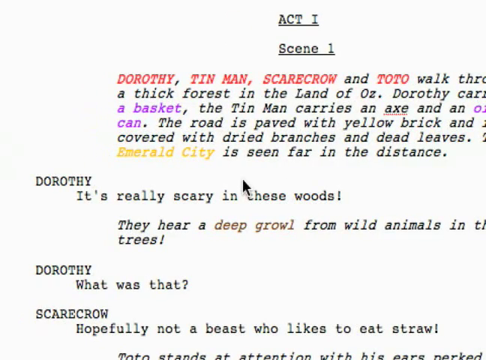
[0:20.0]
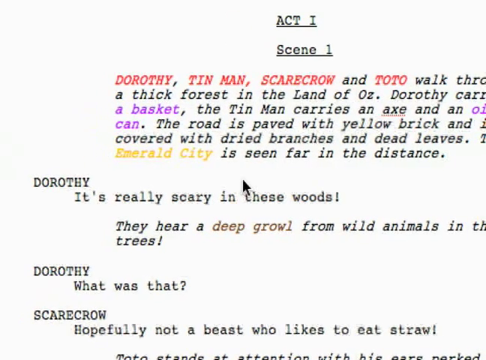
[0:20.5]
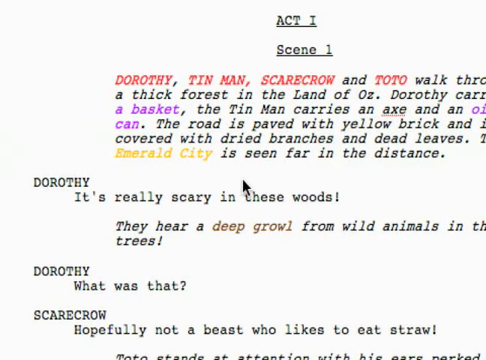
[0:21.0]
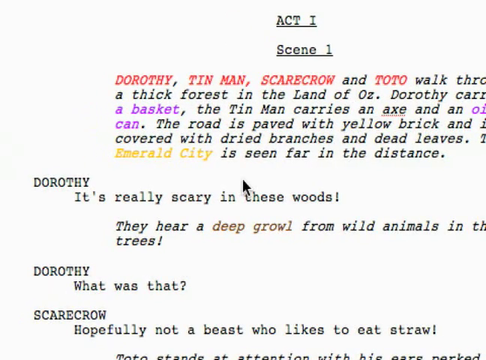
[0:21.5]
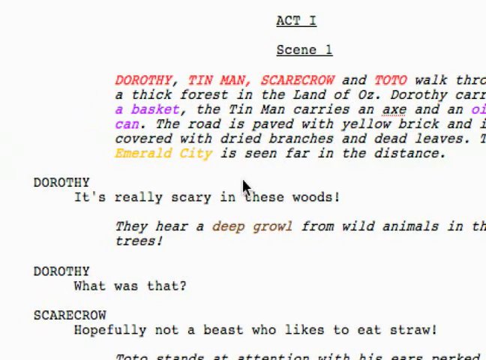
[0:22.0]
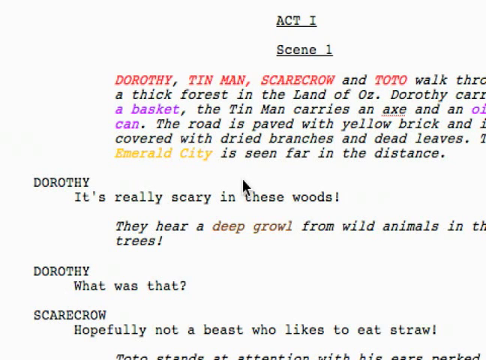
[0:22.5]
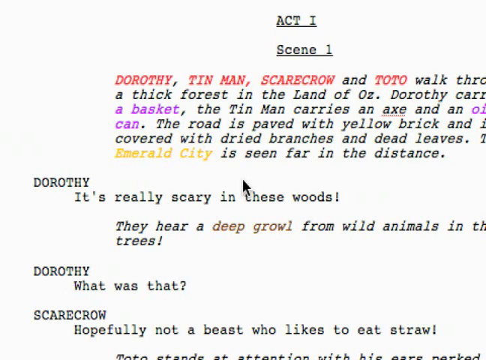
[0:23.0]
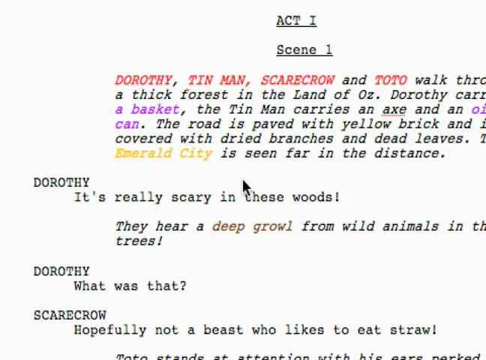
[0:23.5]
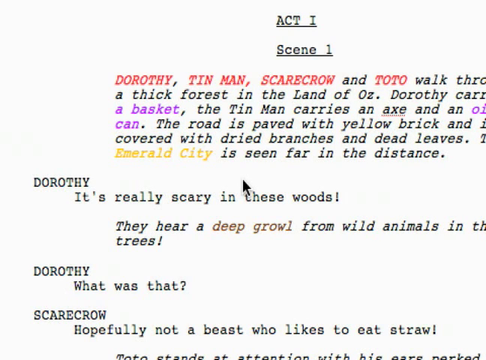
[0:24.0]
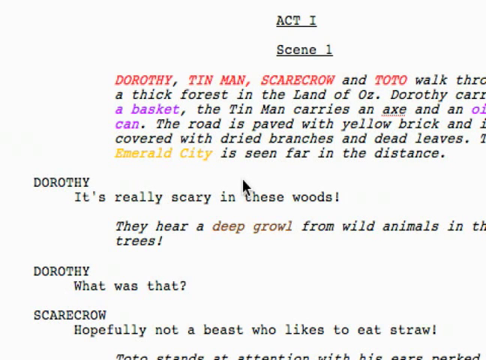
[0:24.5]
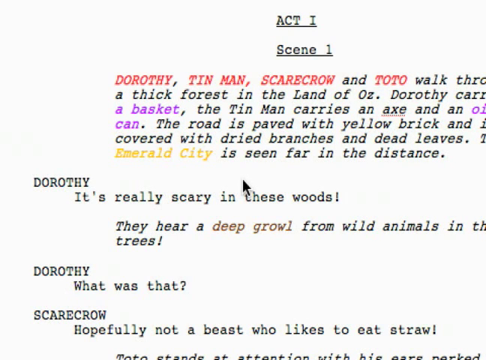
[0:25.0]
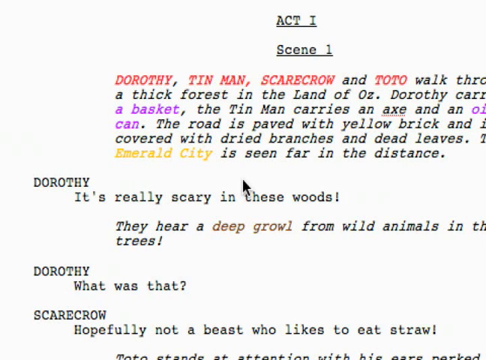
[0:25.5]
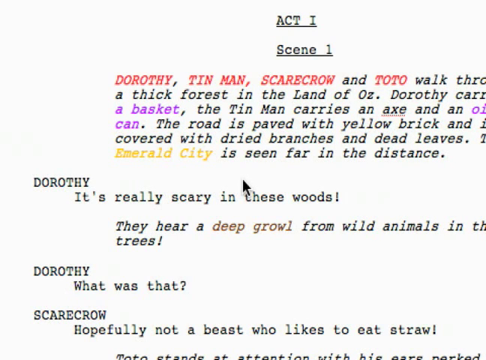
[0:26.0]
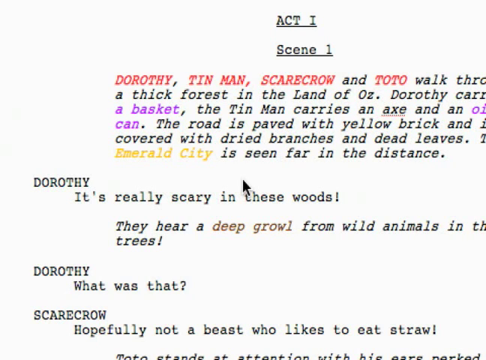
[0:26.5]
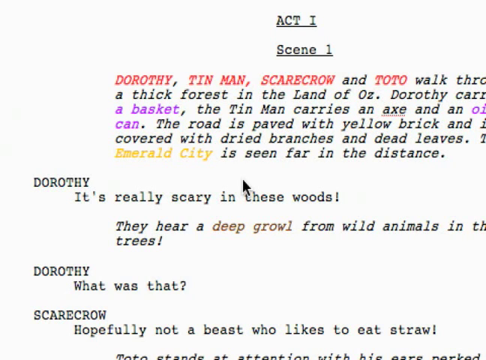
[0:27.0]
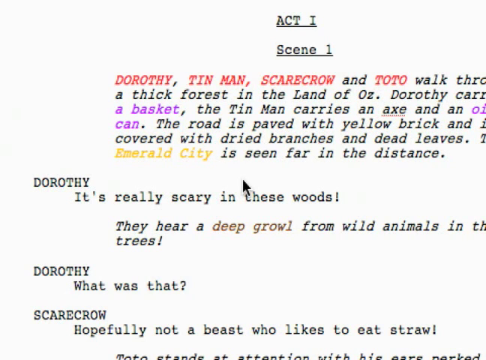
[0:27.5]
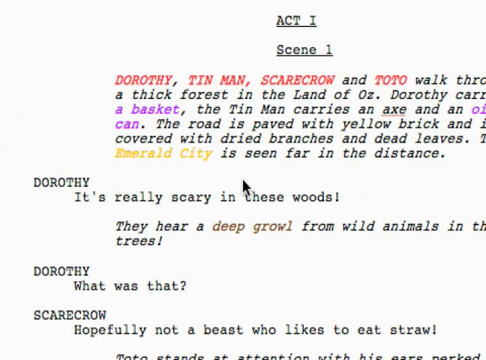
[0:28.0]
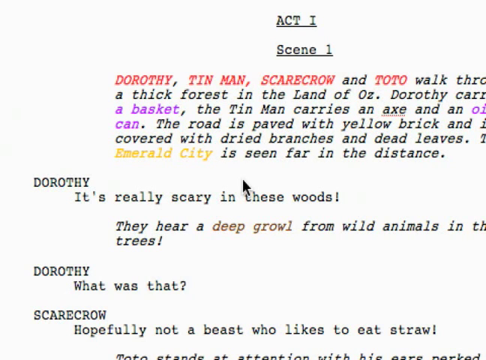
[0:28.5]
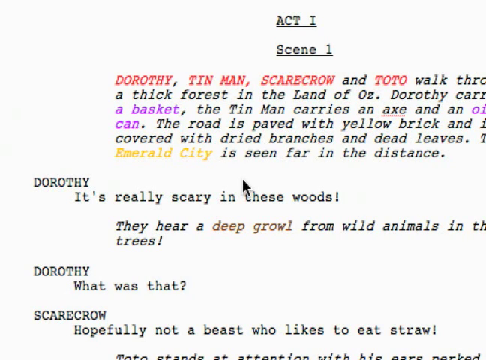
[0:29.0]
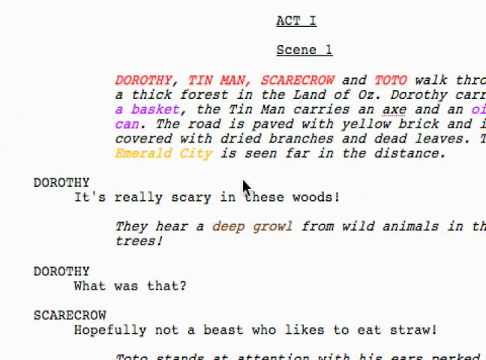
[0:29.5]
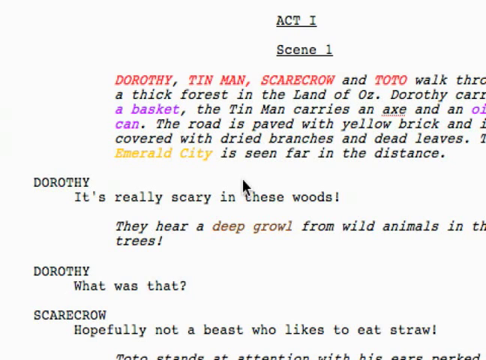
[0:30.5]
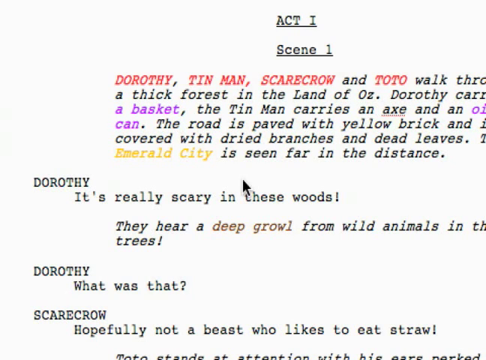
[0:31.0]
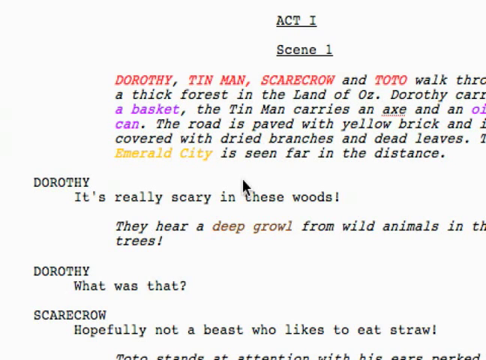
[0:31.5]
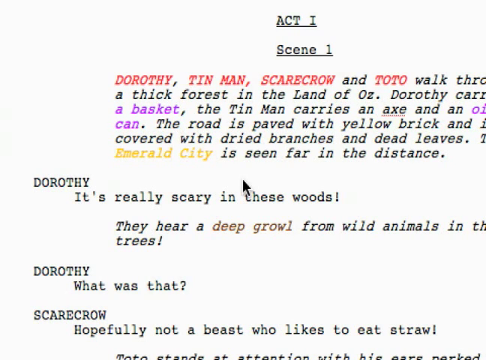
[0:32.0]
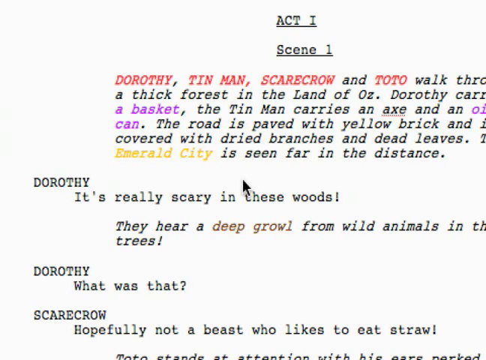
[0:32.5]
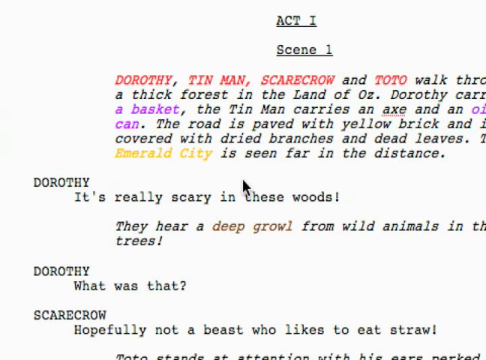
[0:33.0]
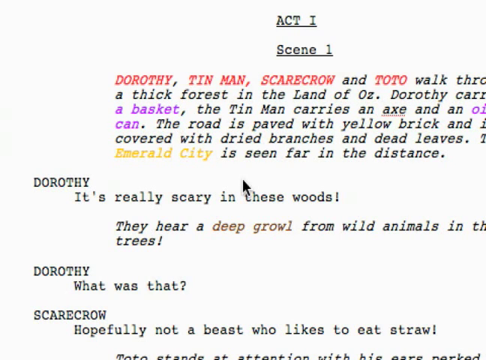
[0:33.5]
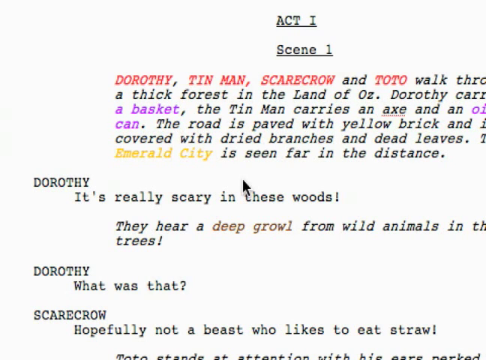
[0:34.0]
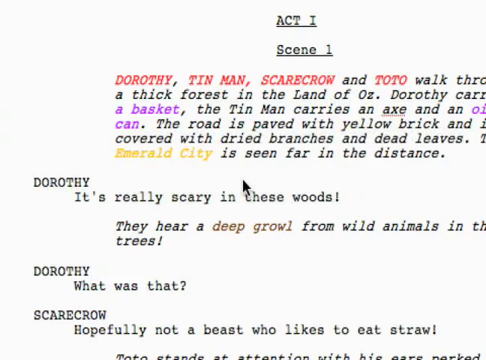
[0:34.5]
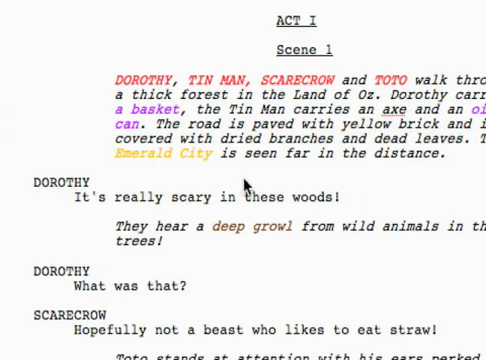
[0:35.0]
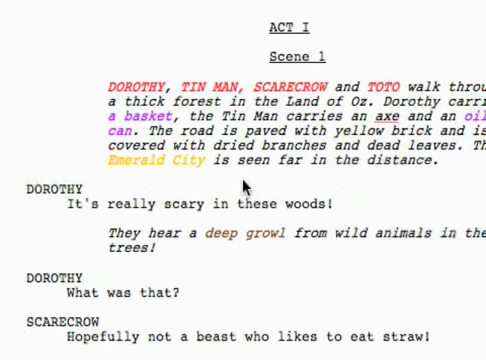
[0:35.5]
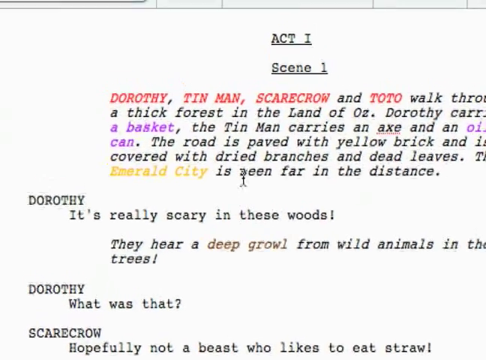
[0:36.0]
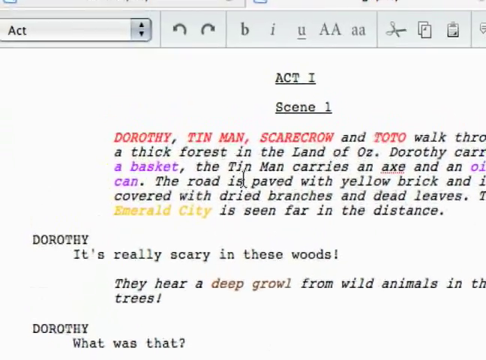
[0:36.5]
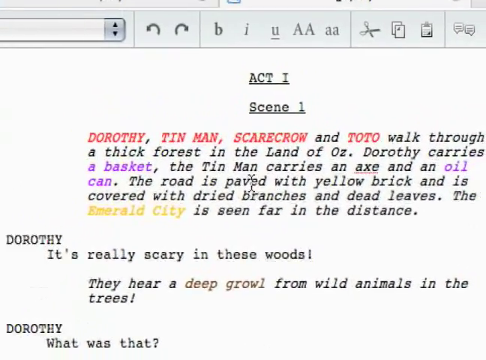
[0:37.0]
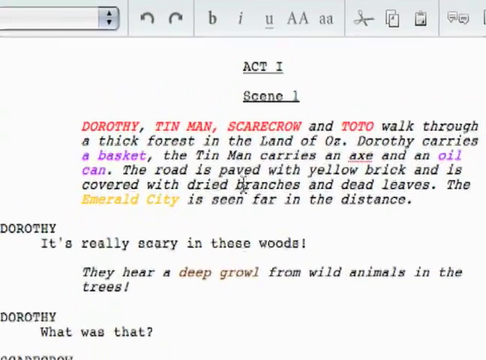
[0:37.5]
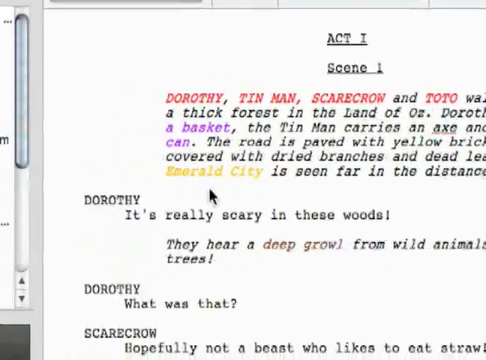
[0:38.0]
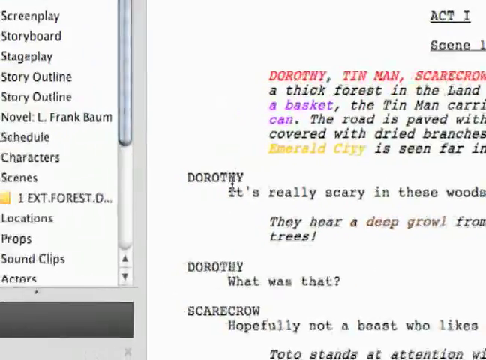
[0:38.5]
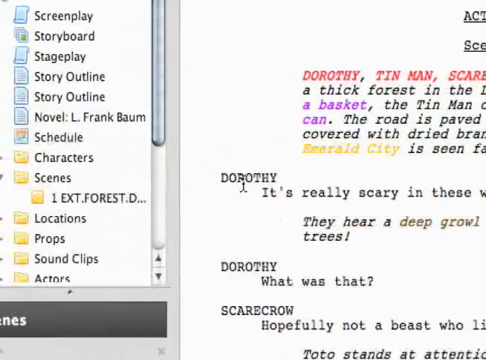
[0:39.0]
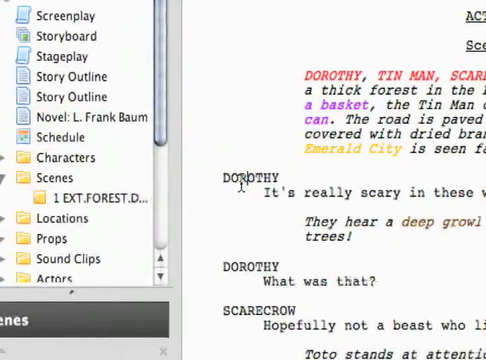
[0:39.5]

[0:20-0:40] The script for Act 1, Scene 1 of The Wonderful Wizard of Oz reads "Act 1, Scene 1" and "Dorothy". Half of the first paragraph is cut off by the edge of the video; it tells a story about Dorothy, the Tin Man, the Scarecrow and Toto walking through a forest, mentioning the yellow brick road and the Emerald City. The names Dorothy, Tin Man, Scarecrow and Toto are in red text, the key words "basket" and "oil can" are highlighted in purple, "Emerald City" is in gold, and "deep growl" is in brown. The view stays on this portion of the script for about 10 seconds. The camera moves upward and the cursor moves a little along the first paragraph, revealing the text editor options: undo and redo, a font selection bar on the left, bold, italic, underline, caps lock, cut and copy. The view then moves downward, showing a left bar with options such as screenplay, storyboard and stage play, and the cursor moves to the word "Dorothy" in the main text.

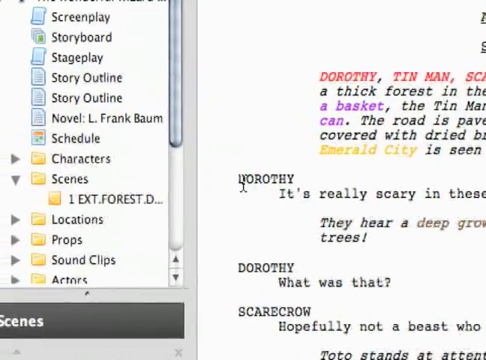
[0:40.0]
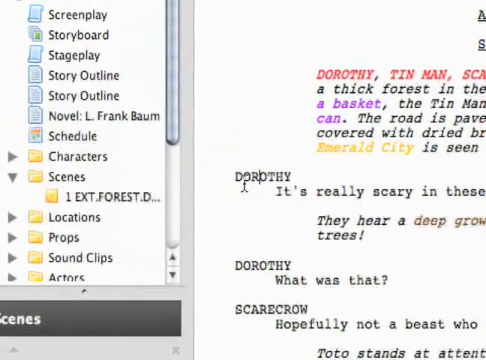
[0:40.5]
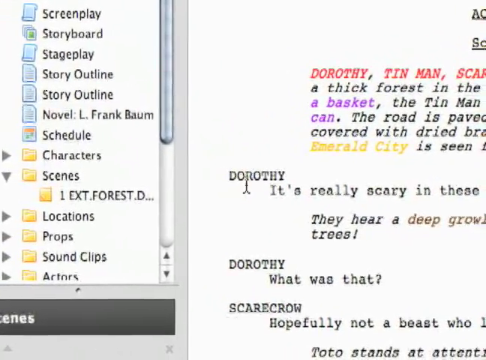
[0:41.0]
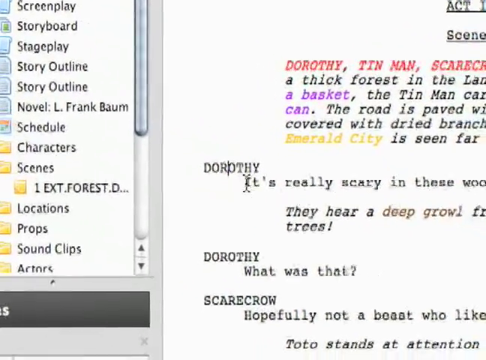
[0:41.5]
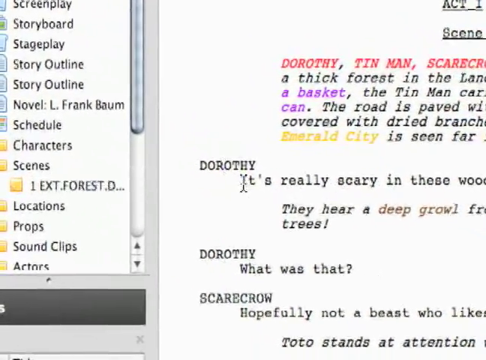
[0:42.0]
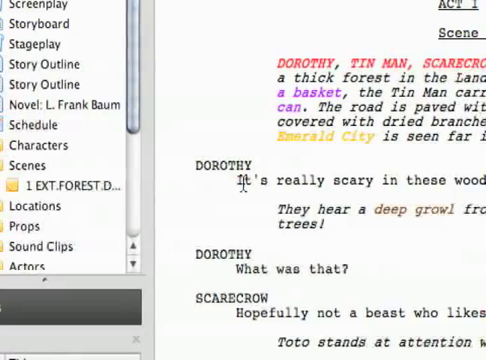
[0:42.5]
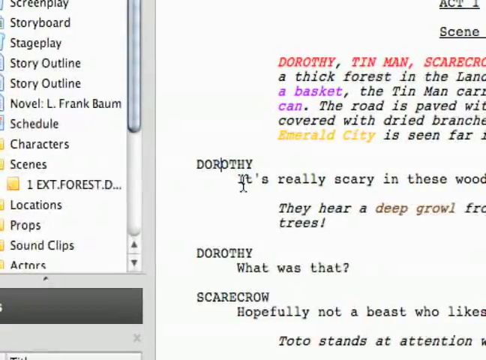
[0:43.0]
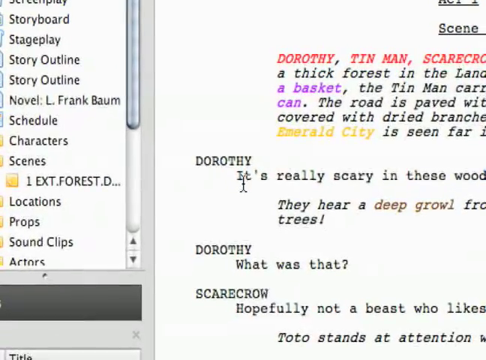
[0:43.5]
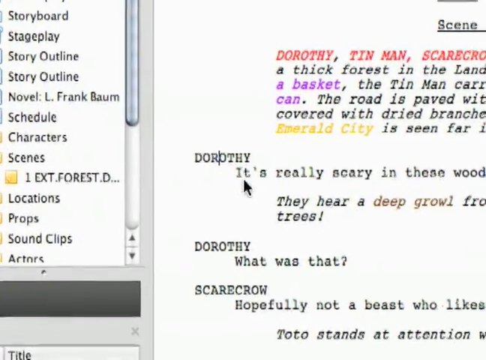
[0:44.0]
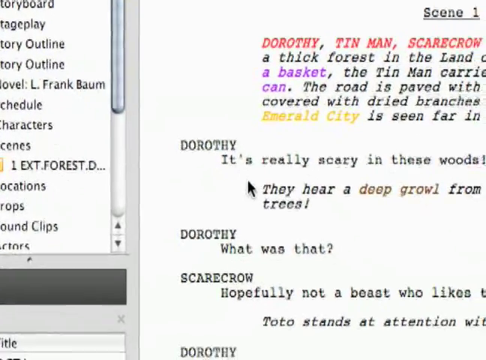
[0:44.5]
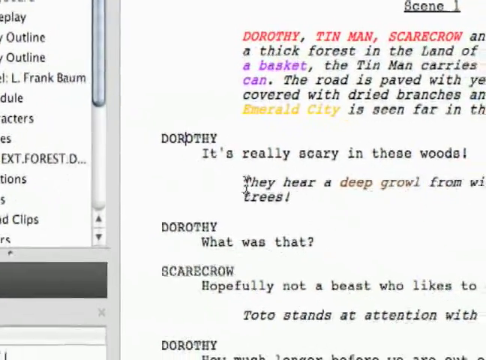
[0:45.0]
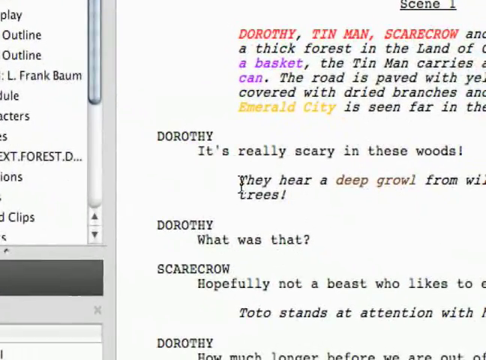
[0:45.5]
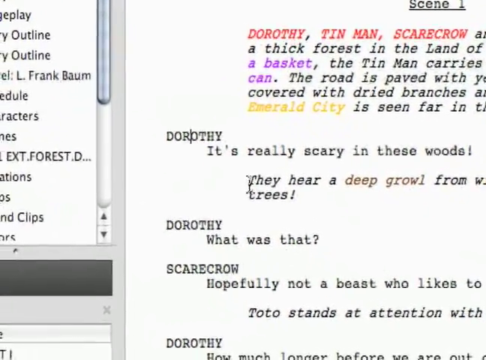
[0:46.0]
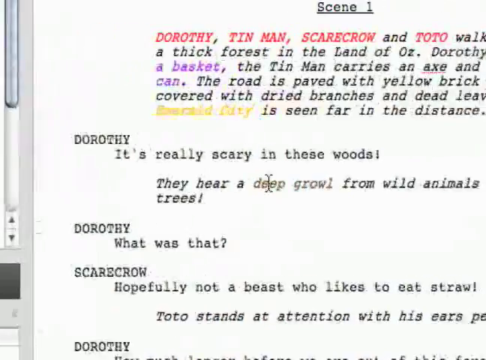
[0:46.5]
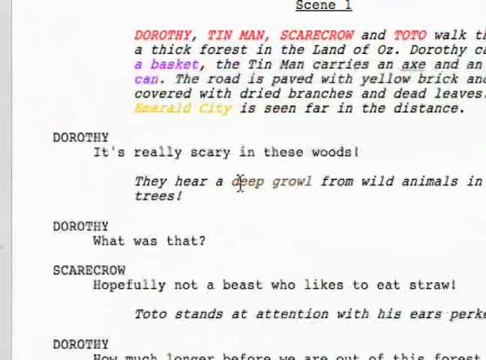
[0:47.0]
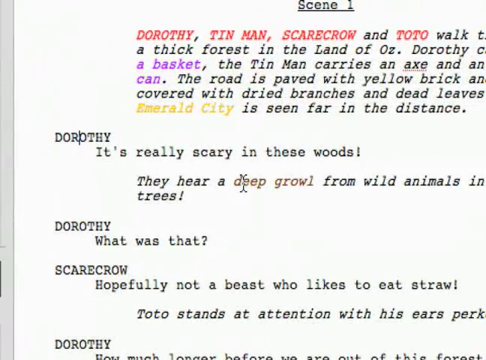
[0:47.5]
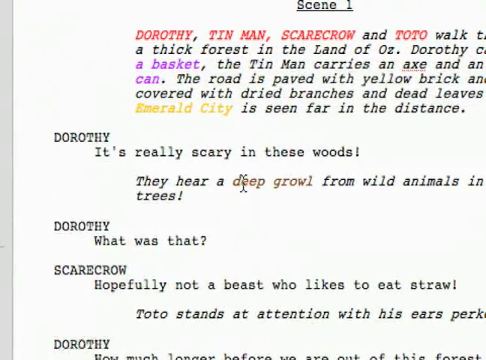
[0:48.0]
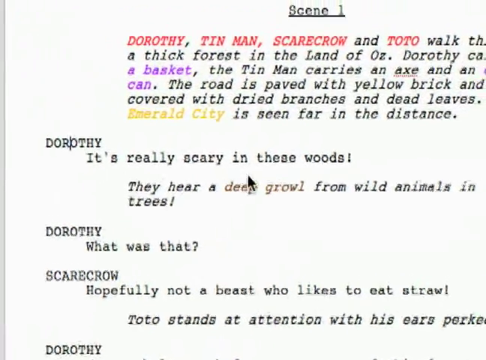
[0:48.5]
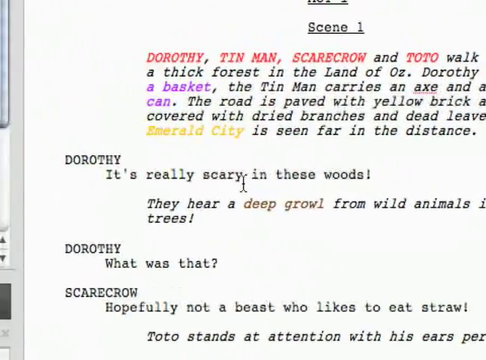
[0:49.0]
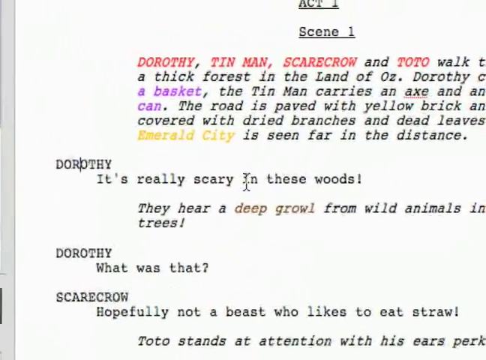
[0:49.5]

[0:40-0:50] The camera shakes a little. The blinking text entry line is in the middle of the word "Dorothy", after the word "are". The view keeps shaking and wobbling, with the cursor hovering just underneath the word "Dorothy". The cursor then moves to the sentence "They hear a deep growl from wild animals in the trees," rapidly sweeps across it, and stops on the first e in "deep"; the words "deep growl" are in brown text. The cursor then moves slightly upward to the word "in" in "It's really scary in these woods."